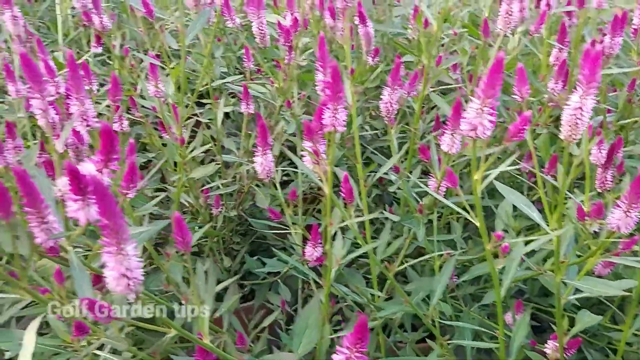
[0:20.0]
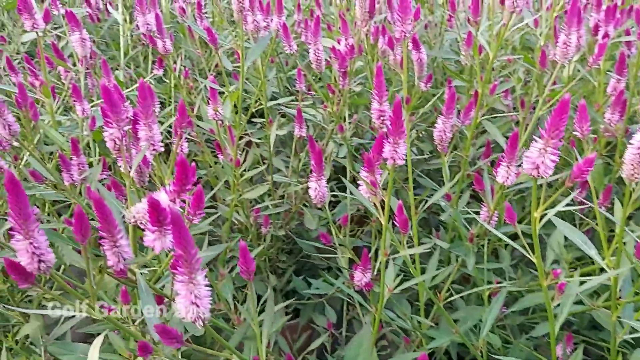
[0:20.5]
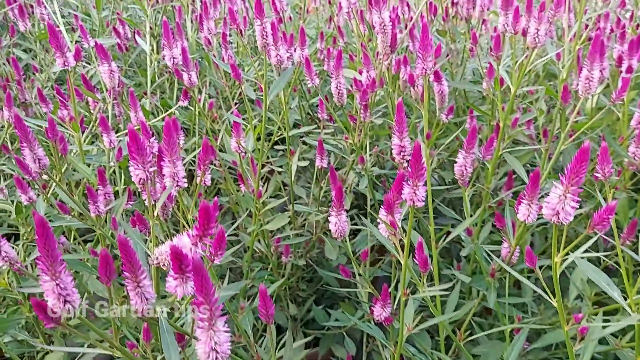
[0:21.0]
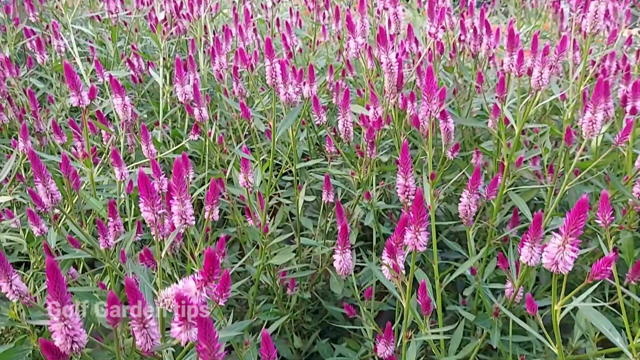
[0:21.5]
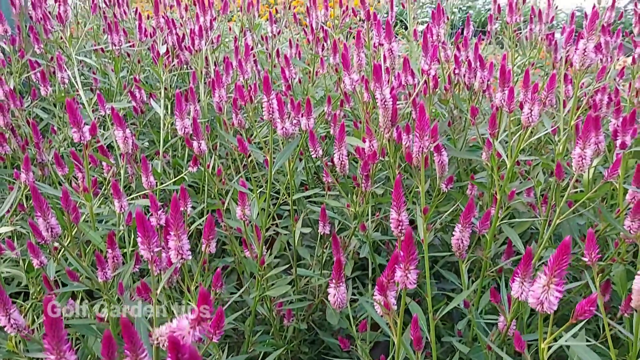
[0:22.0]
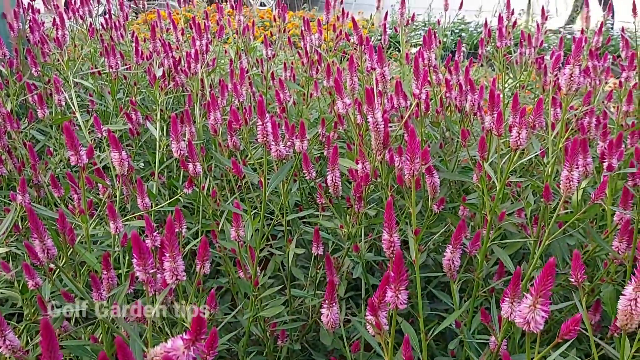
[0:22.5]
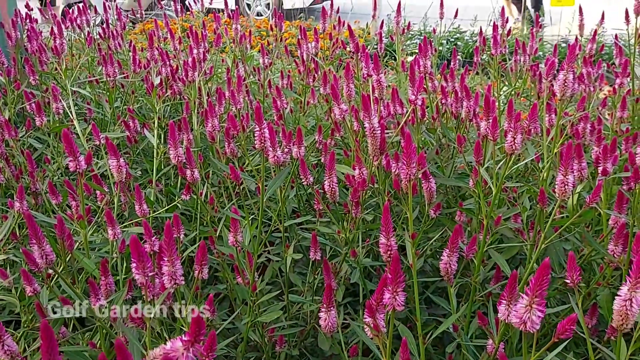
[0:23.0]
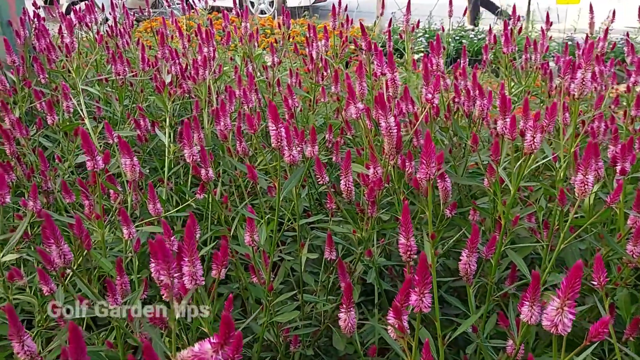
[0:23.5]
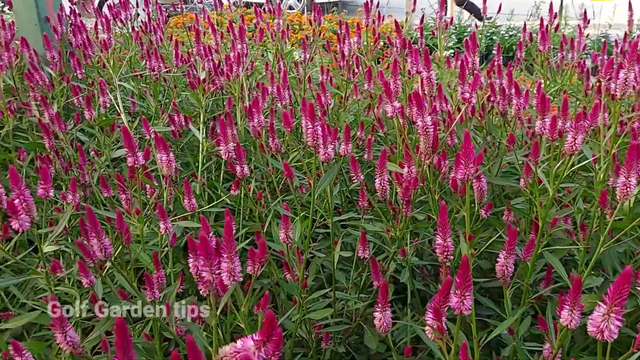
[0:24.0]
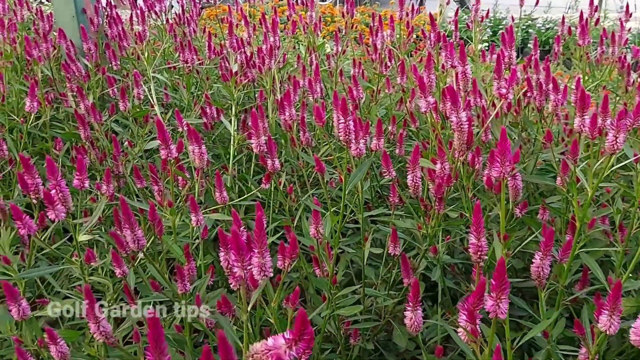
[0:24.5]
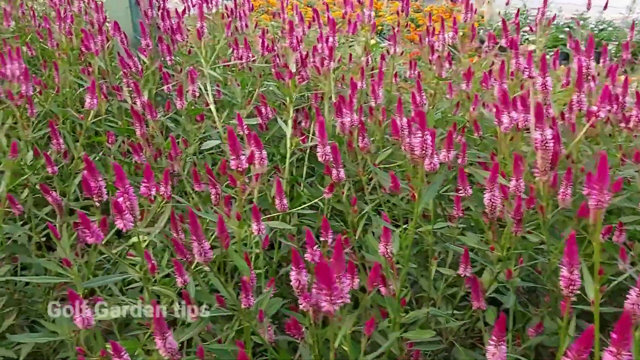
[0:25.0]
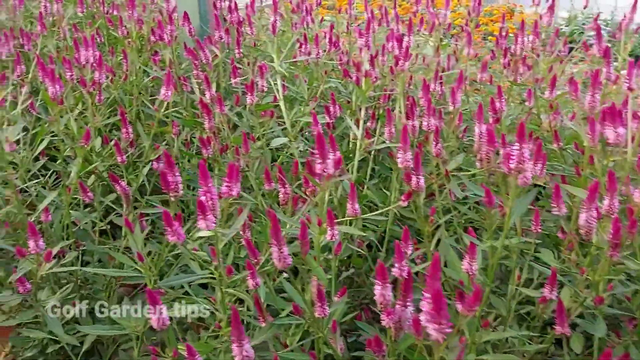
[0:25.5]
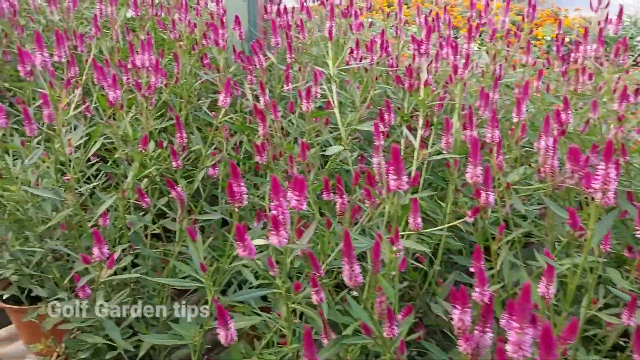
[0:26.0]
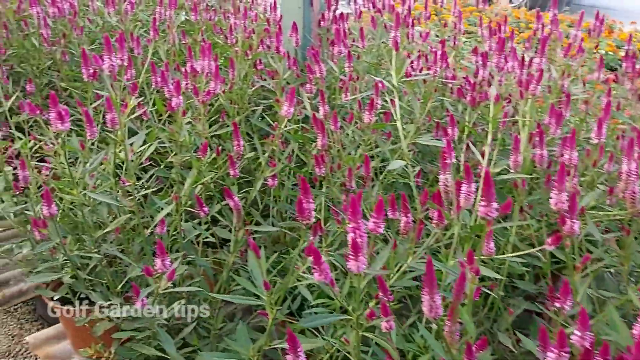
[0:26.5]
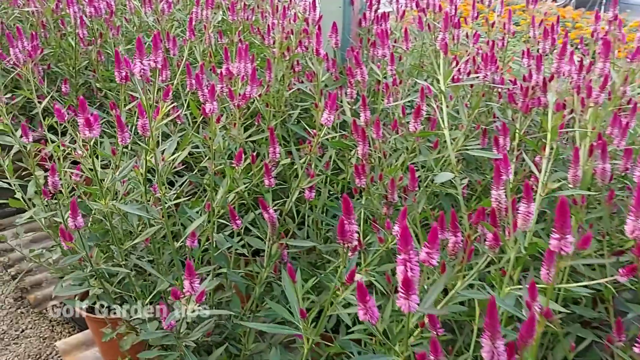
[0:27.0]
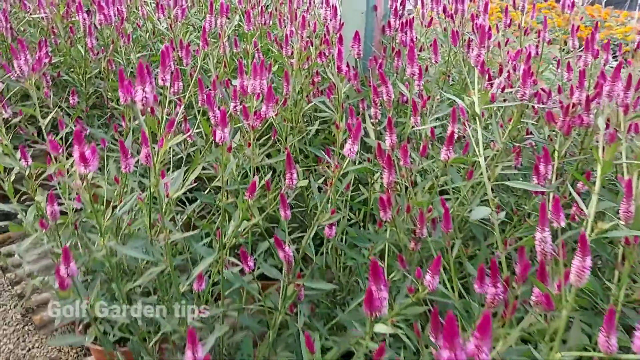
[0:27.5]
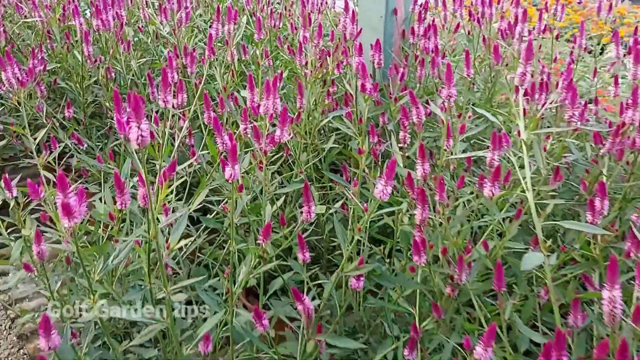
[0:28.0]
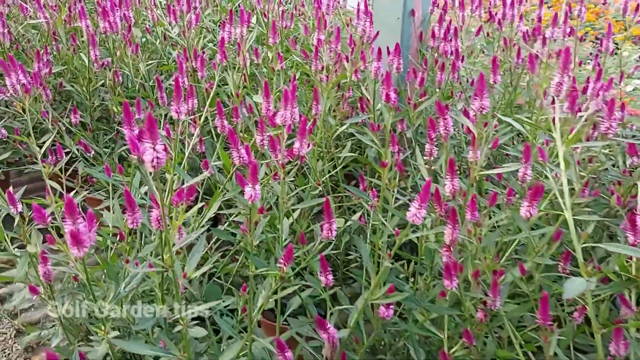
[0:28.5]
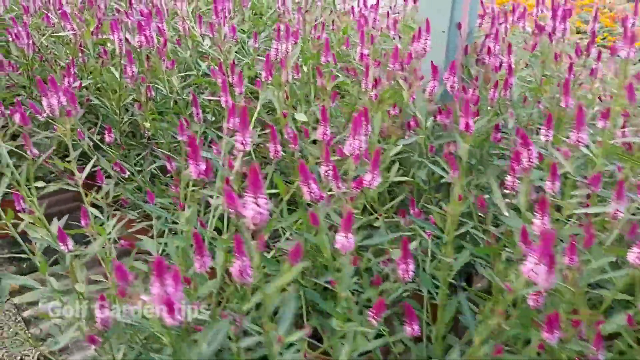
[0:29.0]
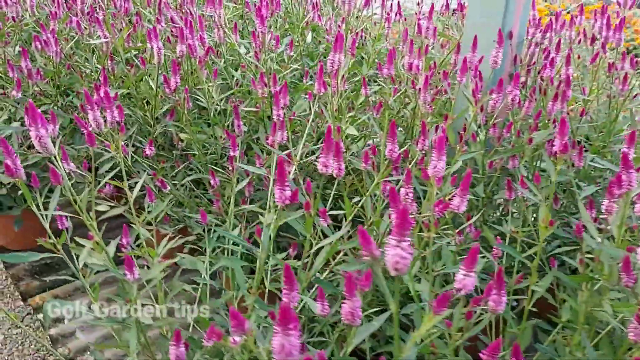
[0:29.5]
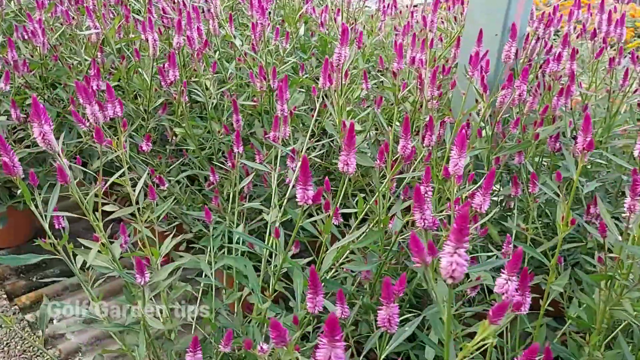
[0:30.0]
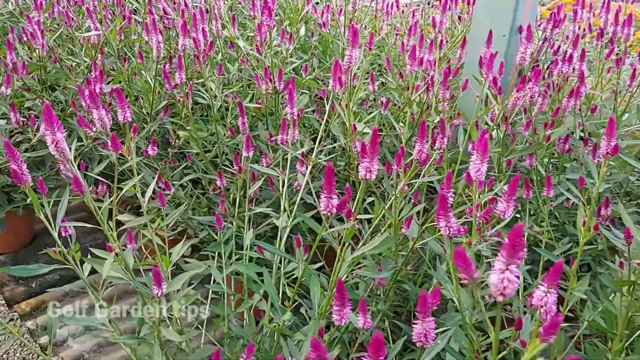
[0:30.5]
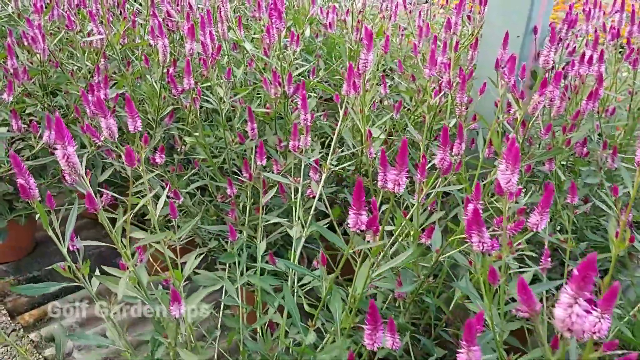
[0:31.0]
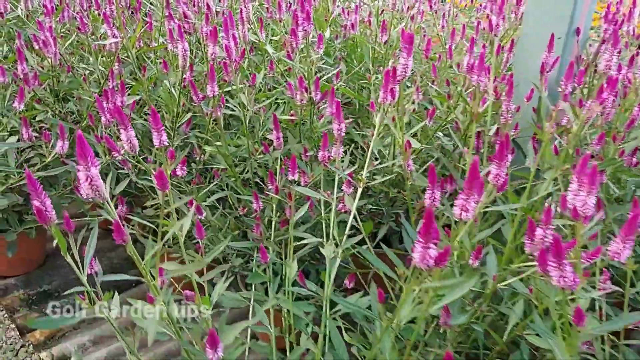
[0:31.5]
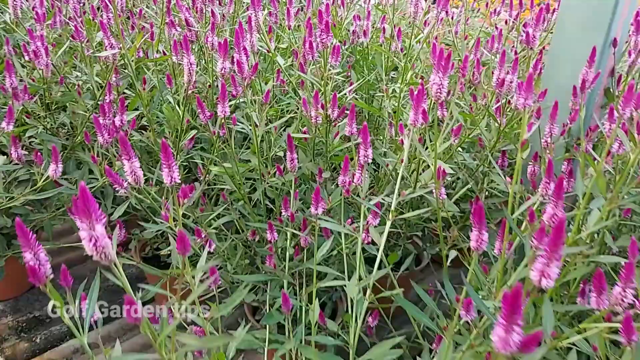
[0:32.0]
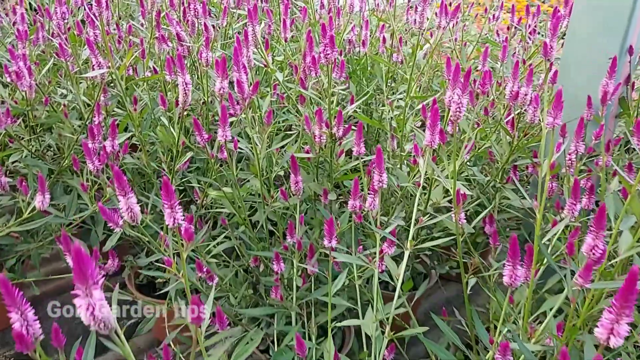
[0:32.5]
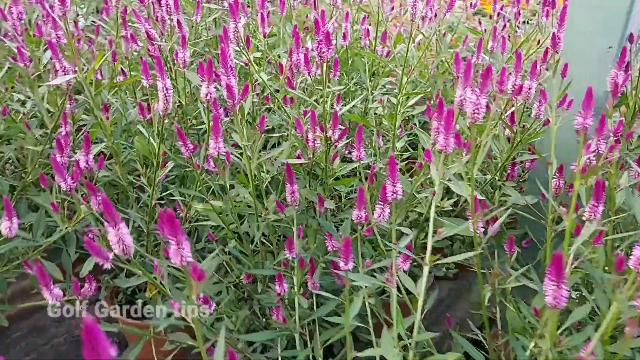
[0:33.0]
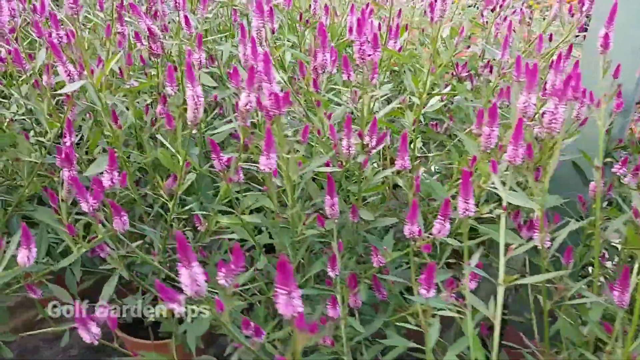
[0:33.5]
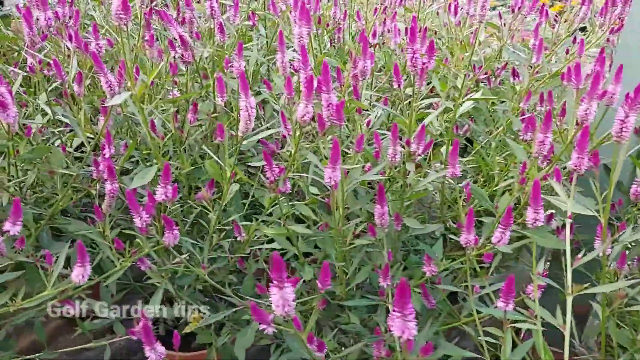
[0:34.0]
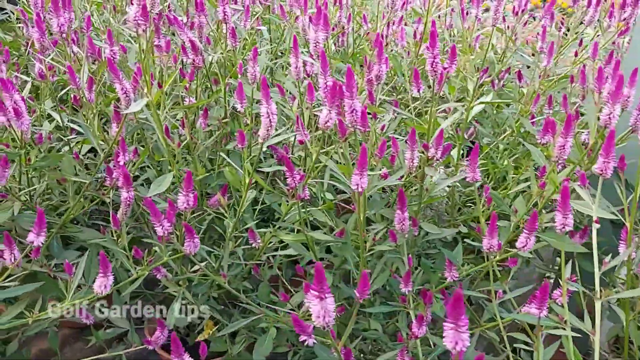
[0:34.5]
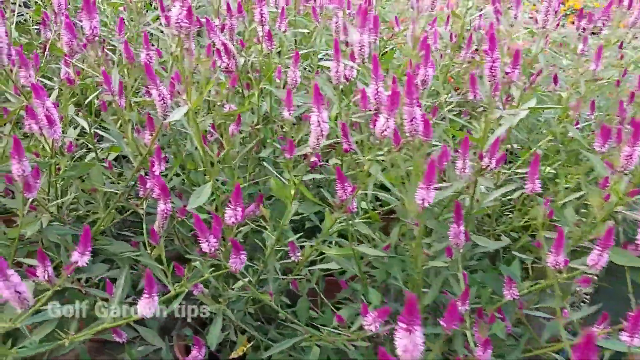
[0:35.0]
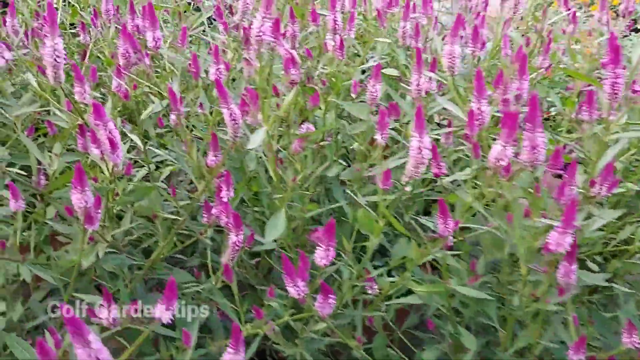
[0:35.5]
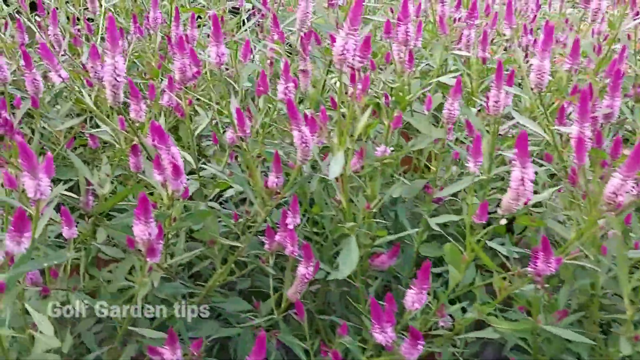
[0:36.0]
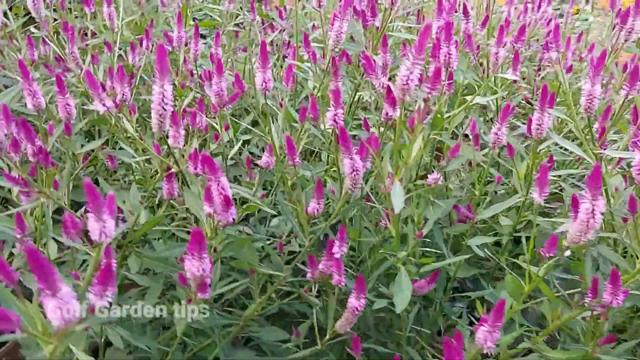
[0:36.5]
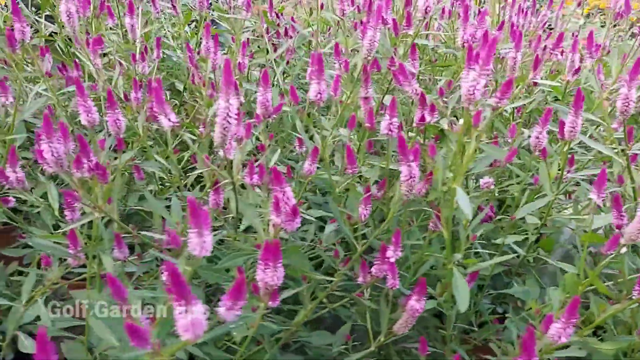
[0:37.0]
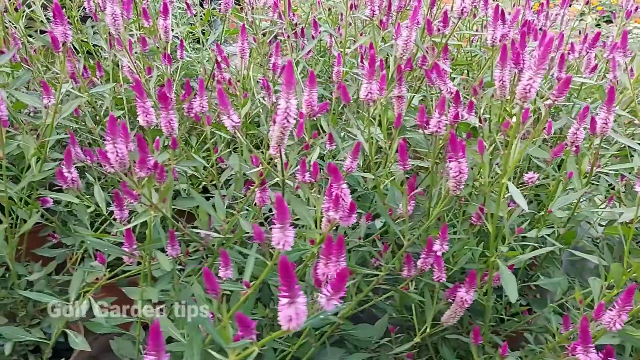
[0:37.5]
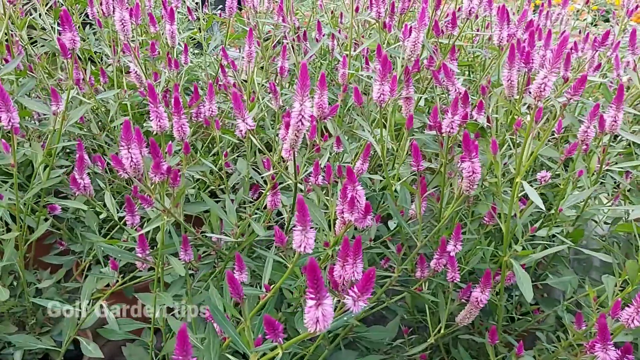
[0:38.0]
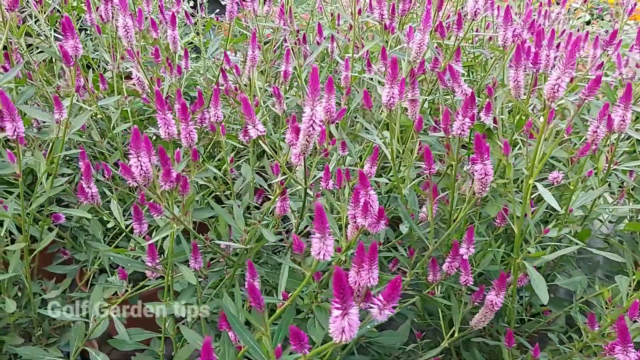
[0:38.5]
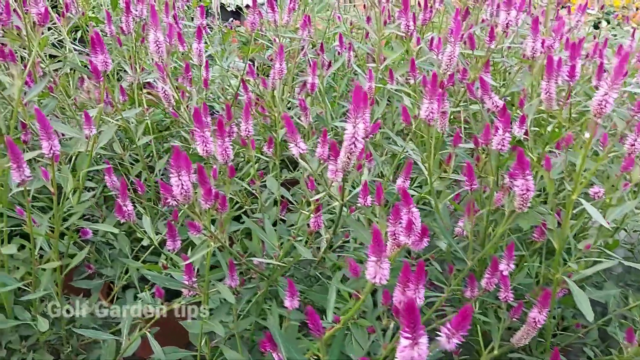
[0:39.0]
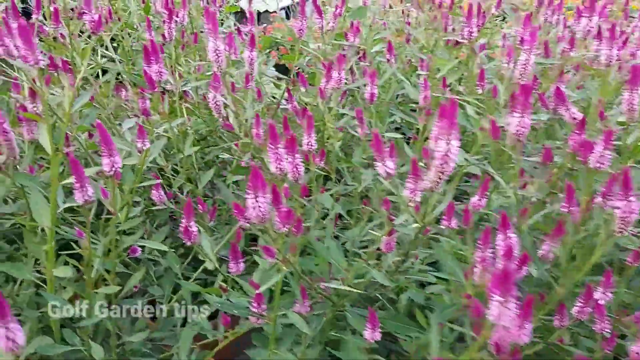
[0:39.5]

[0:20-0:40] The screen continues to read "golf garden tips" over the same expanse of flowers. The camera tips up fully, revealing what looks like a front lawn: behind it are the street, a parked car, and the legs of a man walking by. In front of the pink flowers directly before the camera, toward the curb, is another row of marigolds, and next to that on the right-hand side is a grouping of small white flowers. Once the camera pans up, the full amount of pink flowers growing is visible; it is almost like a canopy with multiple levels, and looking down shows not only green but some of the shorter stems of the pink flowers below. The person pans up to show the street a bit, then walks along the length of flowers, revealing that they are set on a sort of raised platform in individual pots. Each plant is a different height, but together they are all fairly tall. The person walks to the end of the row and stops before zooming in on a single plant.